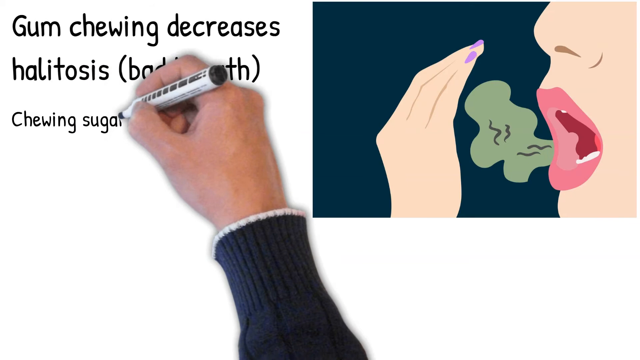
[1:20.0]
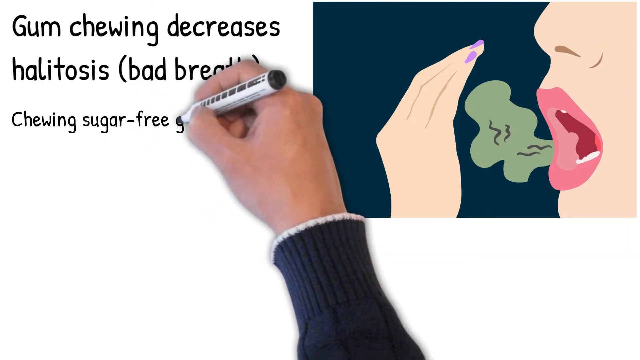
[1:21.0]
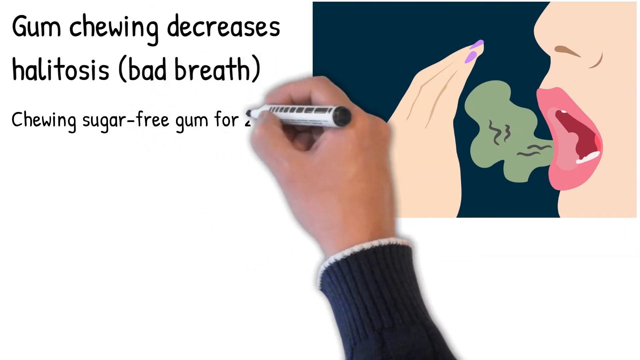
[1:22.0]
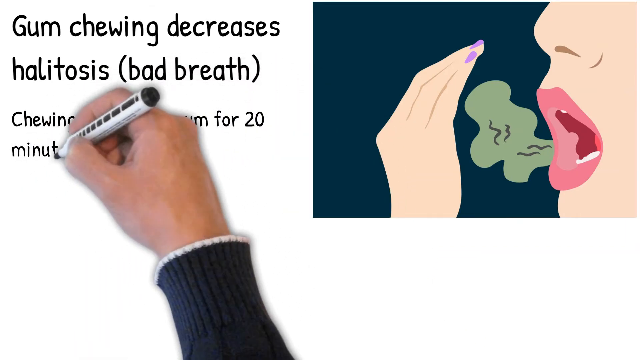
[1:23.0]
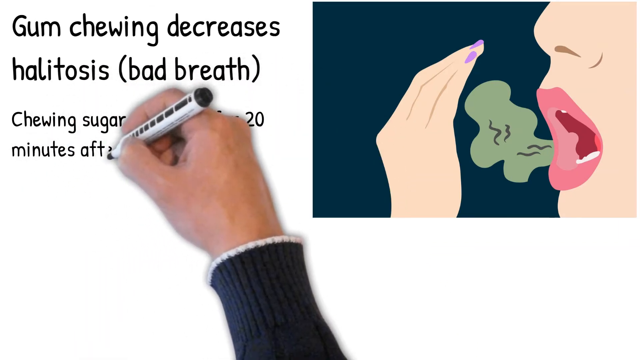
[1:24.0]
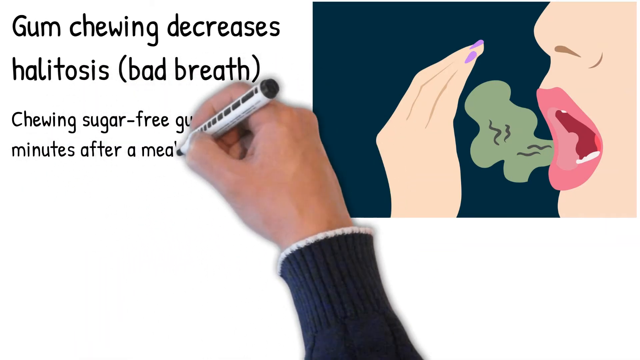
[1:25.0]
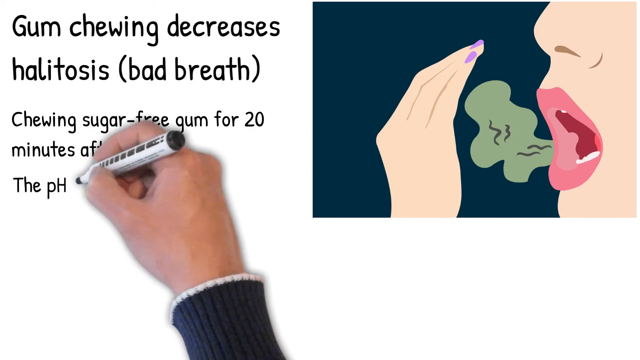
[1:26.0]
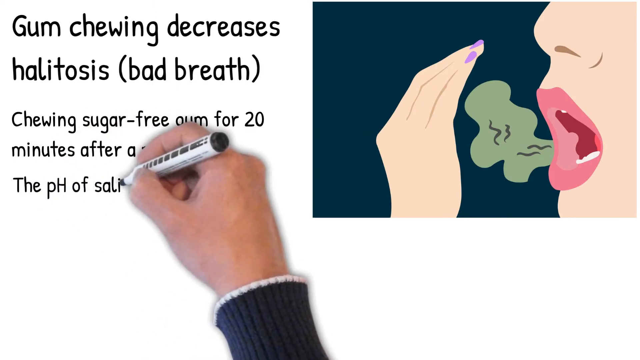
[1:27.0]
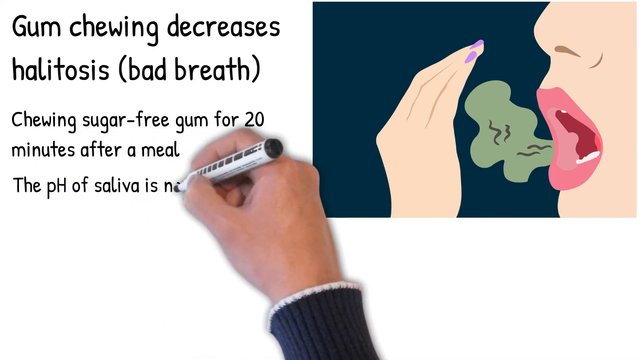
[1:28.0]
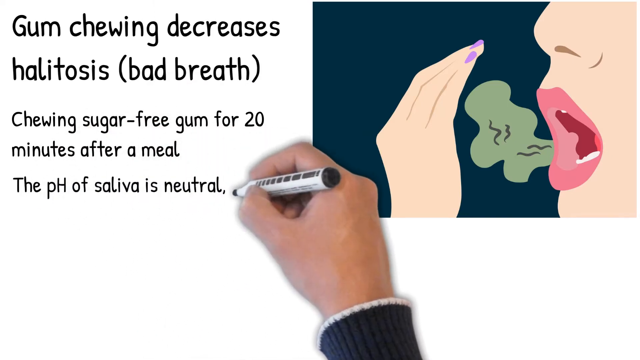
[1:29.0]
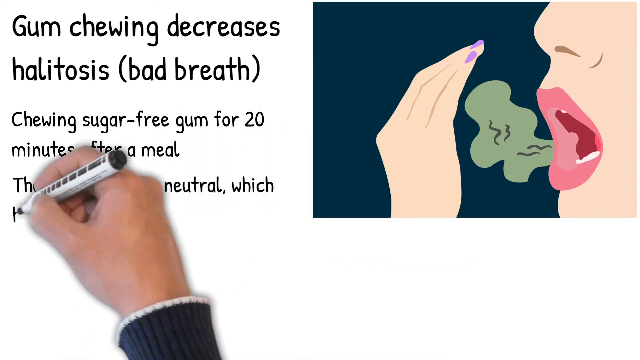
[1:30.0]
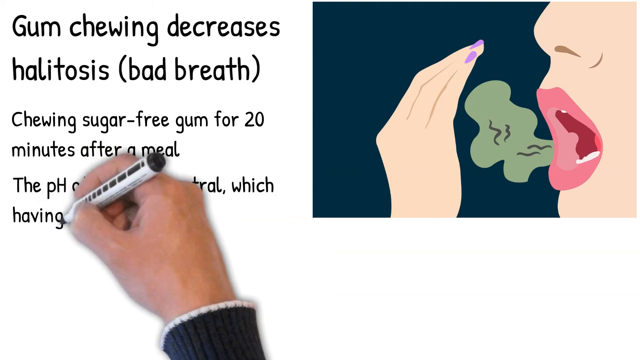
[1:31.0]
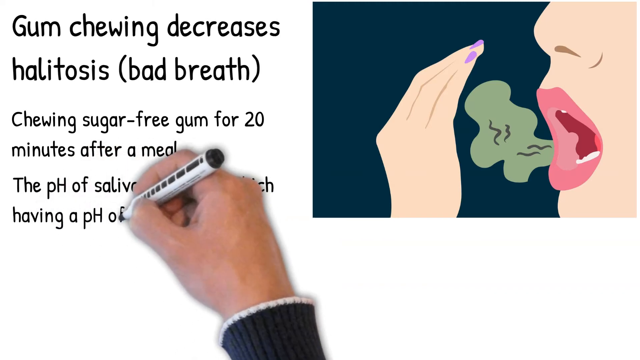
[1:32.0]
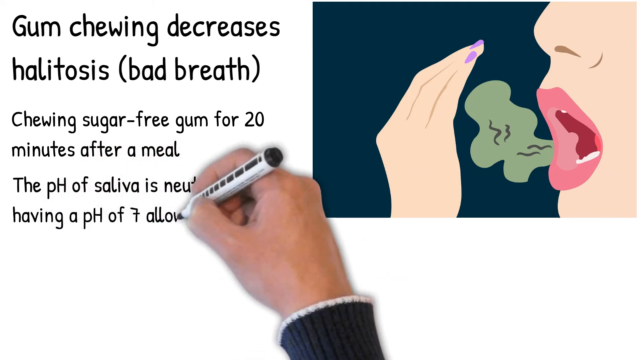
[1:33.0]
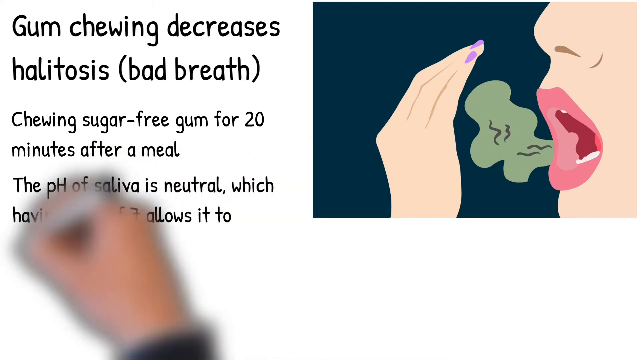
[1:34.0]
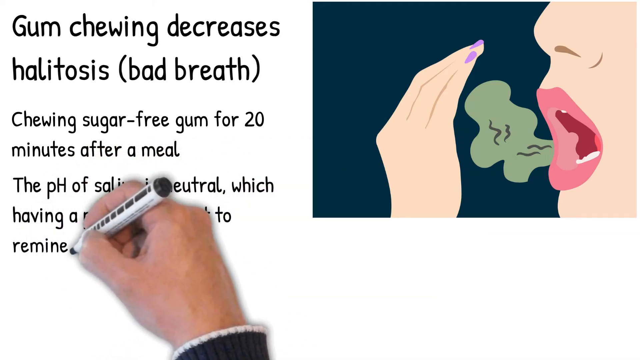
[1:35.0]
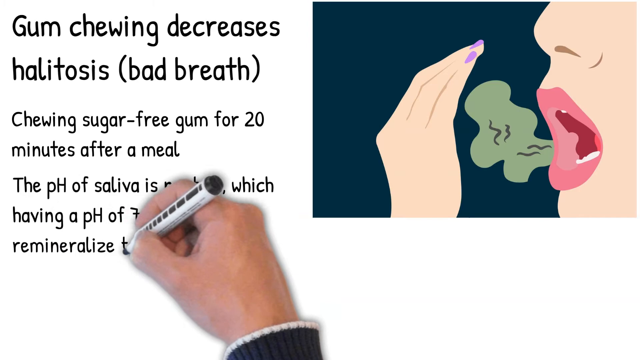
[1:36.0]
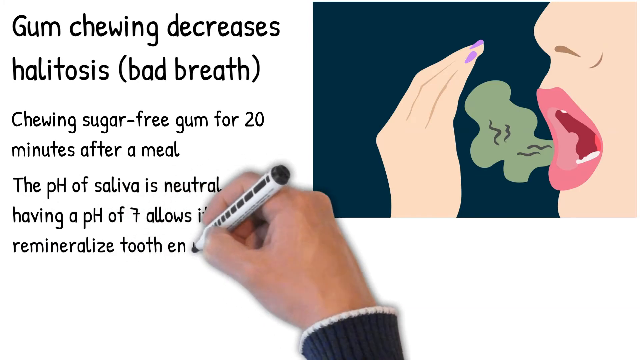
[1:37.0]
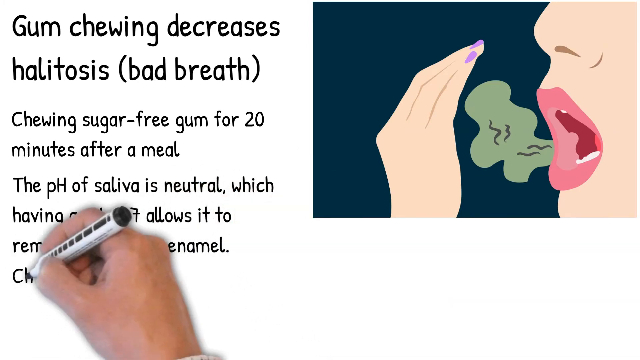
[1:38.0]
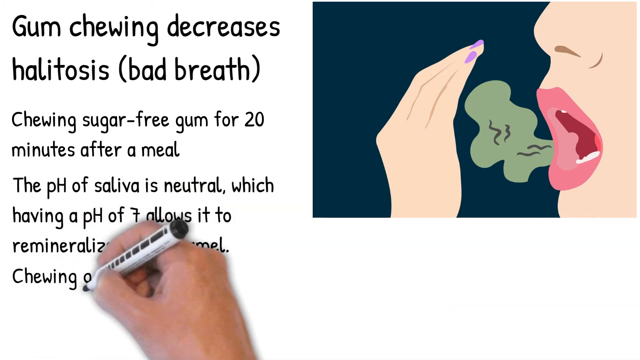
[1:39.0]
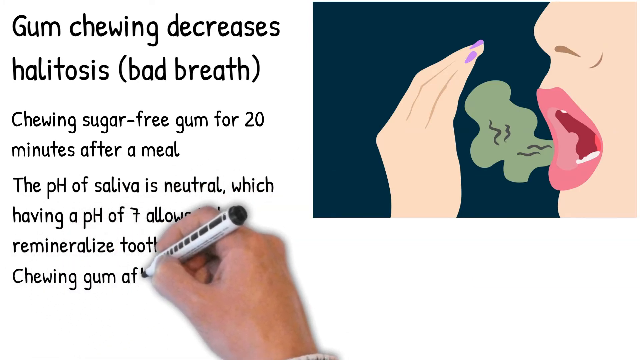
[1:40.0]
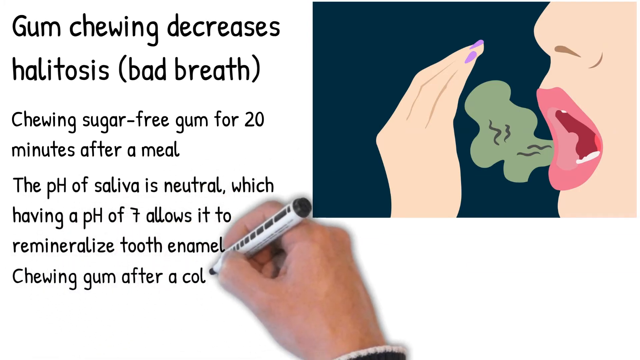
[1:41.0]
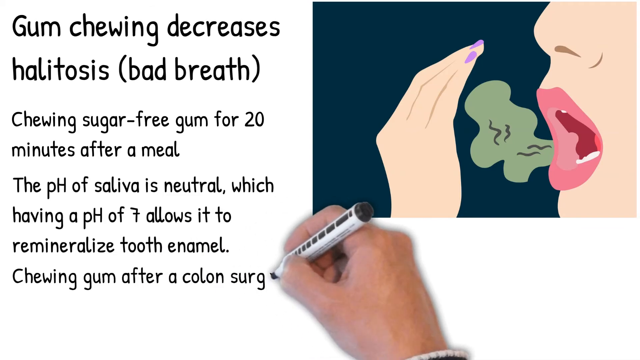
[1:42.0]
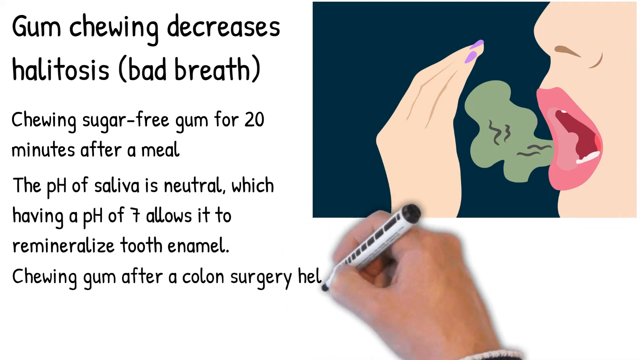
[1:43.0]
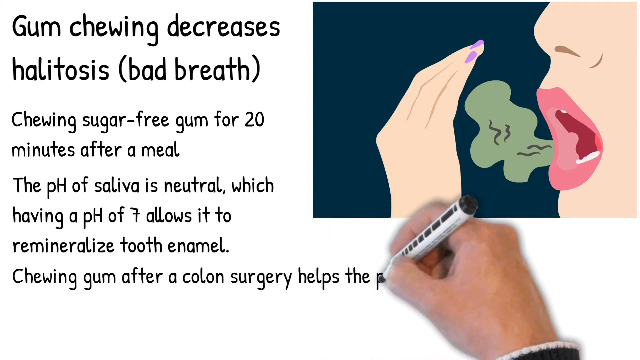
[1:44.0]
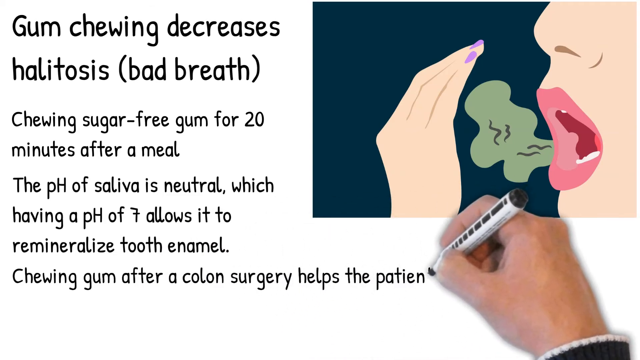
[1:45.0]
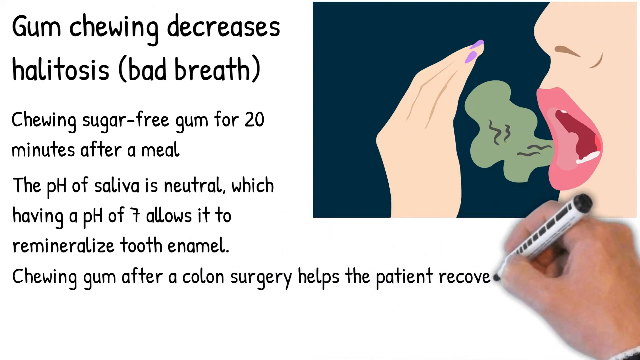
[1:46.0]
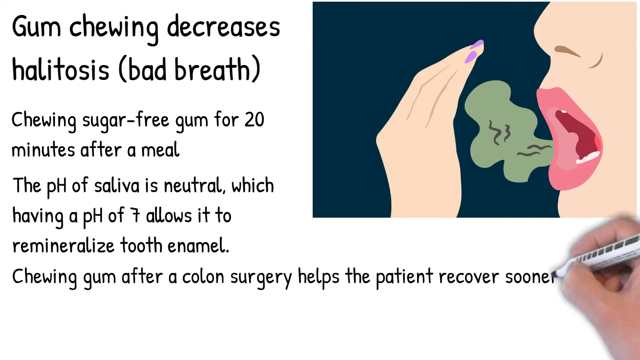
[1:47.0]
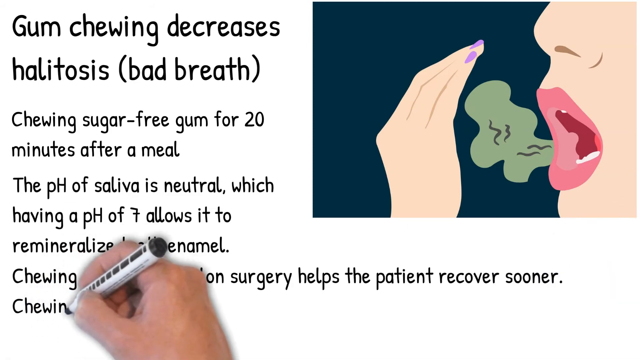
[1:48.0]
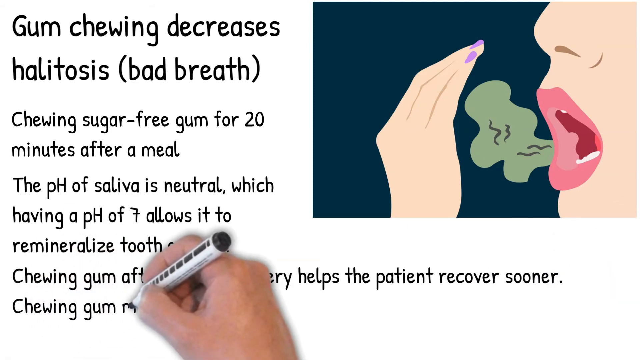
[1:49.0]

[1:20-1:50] The hand returns below the heading and writes "chewing sugar-free gum for 20 minutes after a meal the pH of saliva is neutral which having a pH of seven allows it to remineralize tooth enamel chewing gum after a colon surgery helps the patient recover sooner chewing gum may be", where the text cuts off. The text is written to the left of the picture, which is in the top right-hand corner; once the text reaches the line of the image's bottom, it continues from left to right underneath the image. It is all in a black handwritten format to make it look as if the hand is writing it. The hand does not move naturally: it simply glides across the screen from left to right, bouncing slightly up and down in an unnatural way to mimic writing.